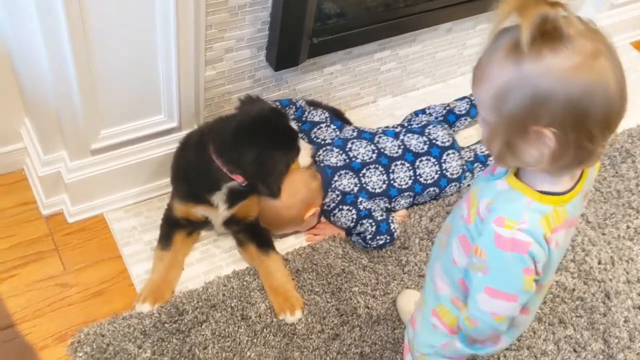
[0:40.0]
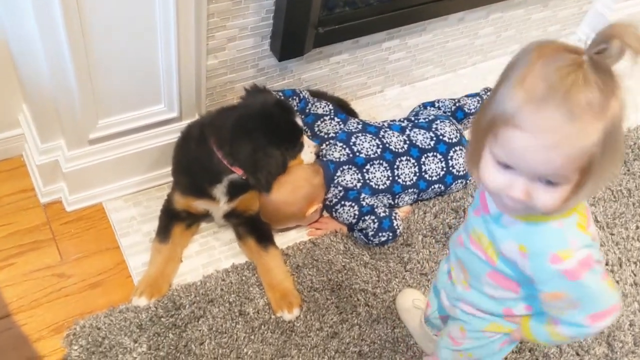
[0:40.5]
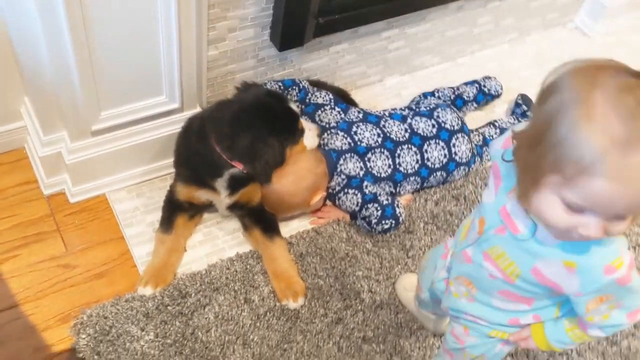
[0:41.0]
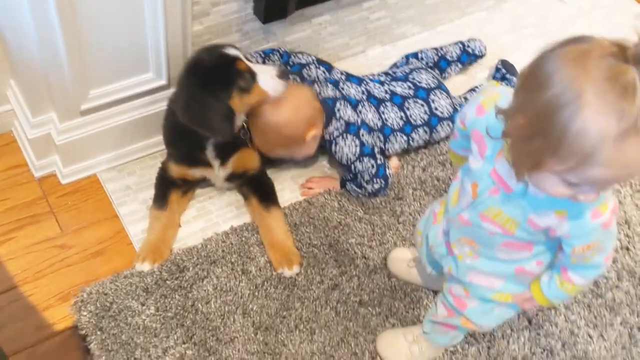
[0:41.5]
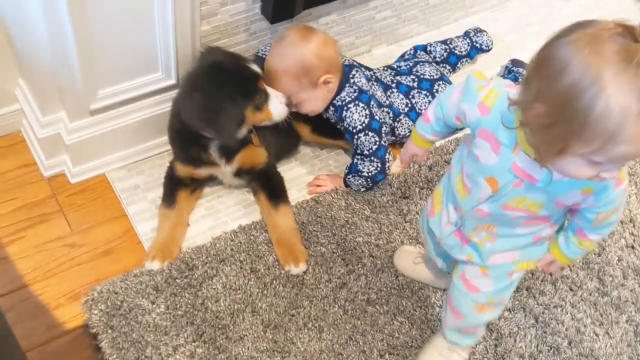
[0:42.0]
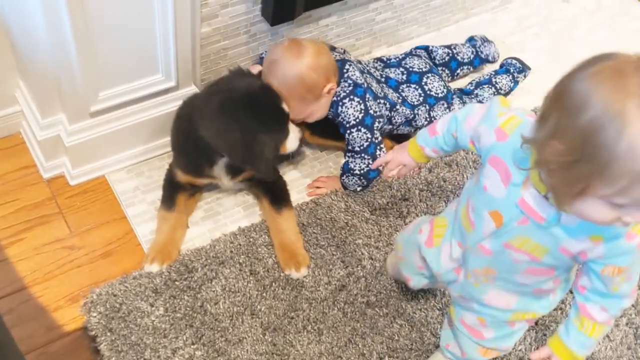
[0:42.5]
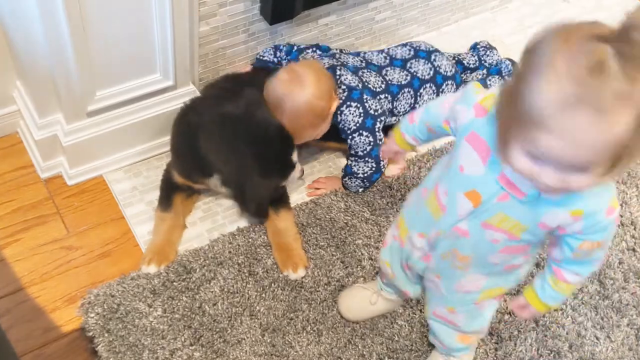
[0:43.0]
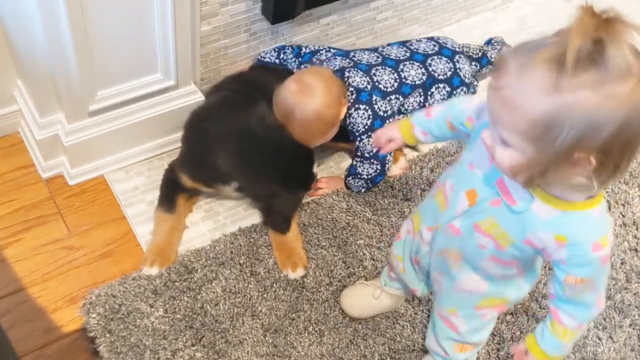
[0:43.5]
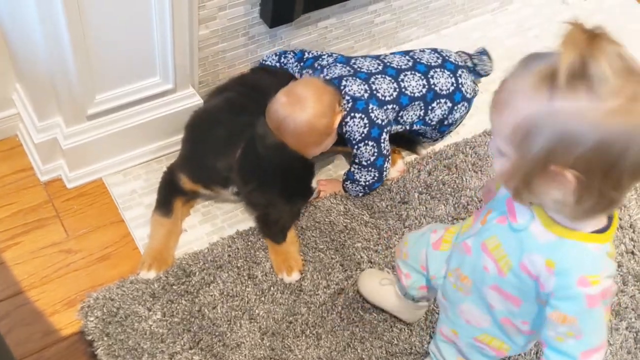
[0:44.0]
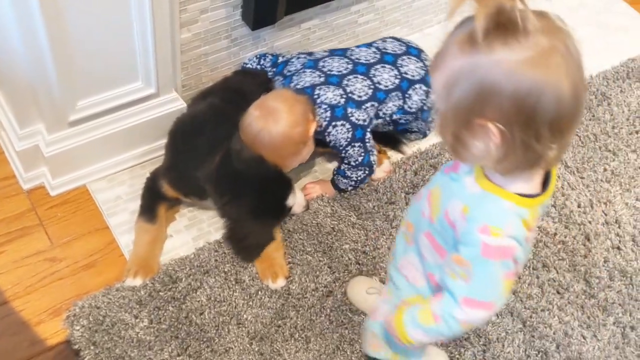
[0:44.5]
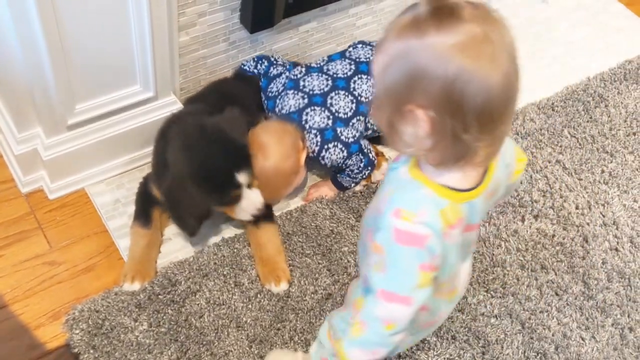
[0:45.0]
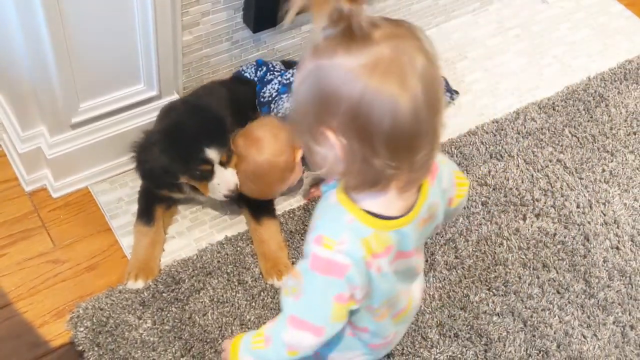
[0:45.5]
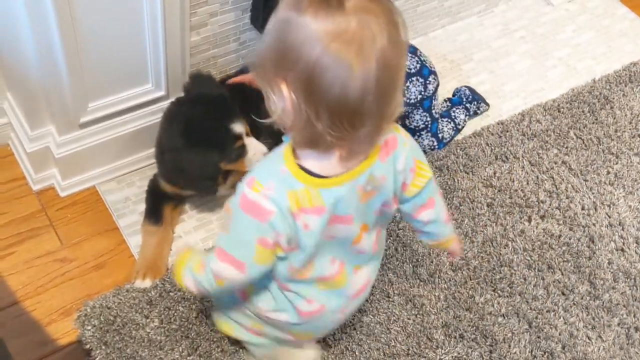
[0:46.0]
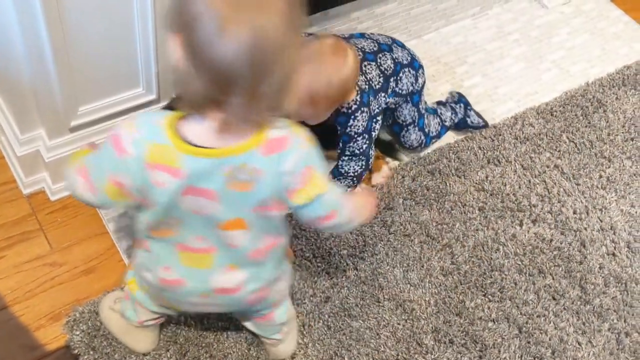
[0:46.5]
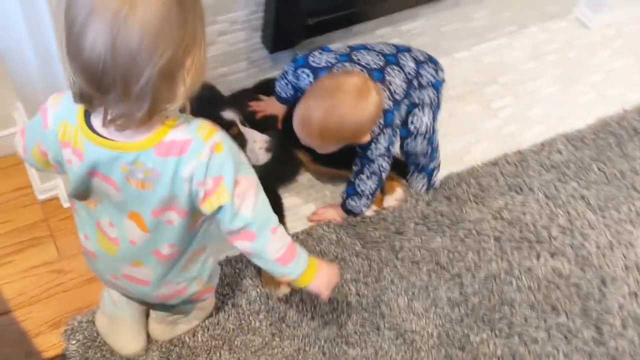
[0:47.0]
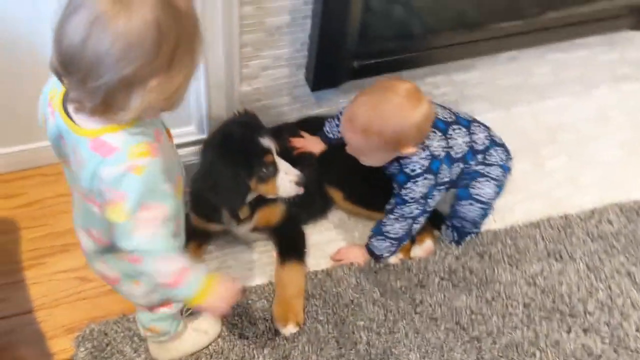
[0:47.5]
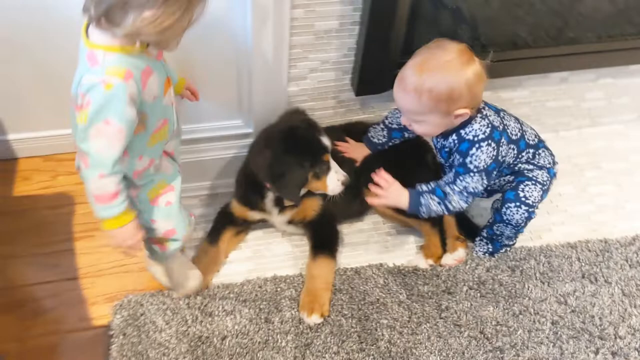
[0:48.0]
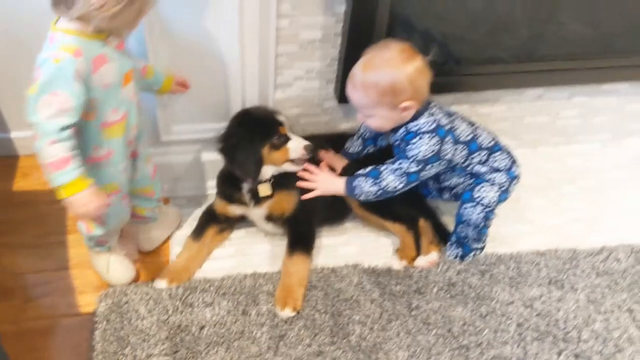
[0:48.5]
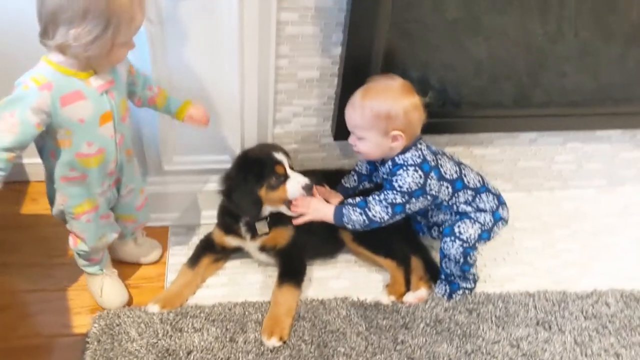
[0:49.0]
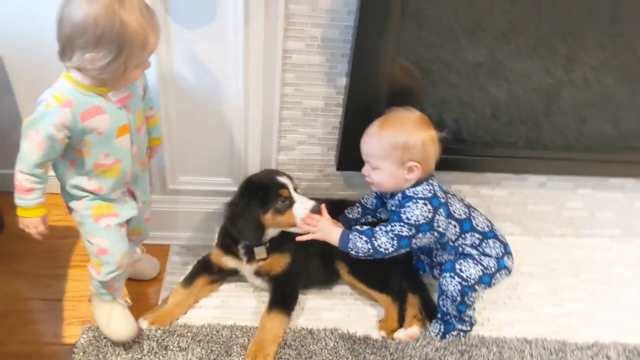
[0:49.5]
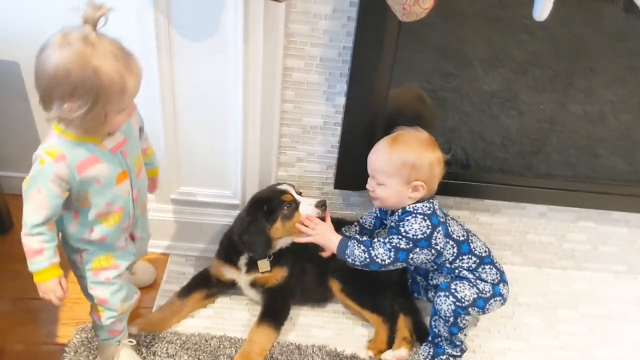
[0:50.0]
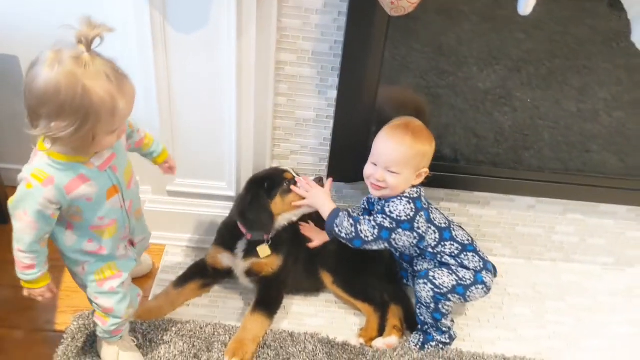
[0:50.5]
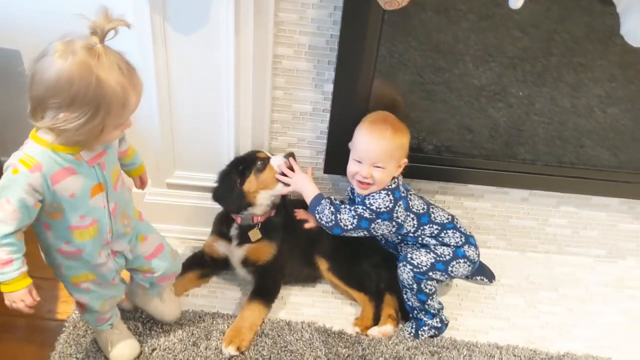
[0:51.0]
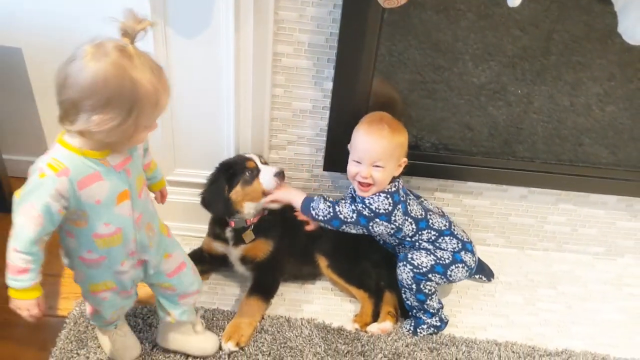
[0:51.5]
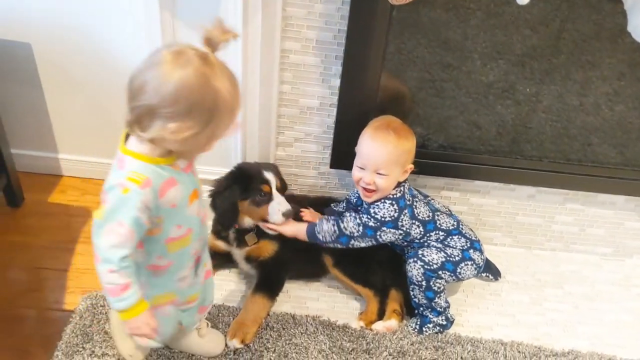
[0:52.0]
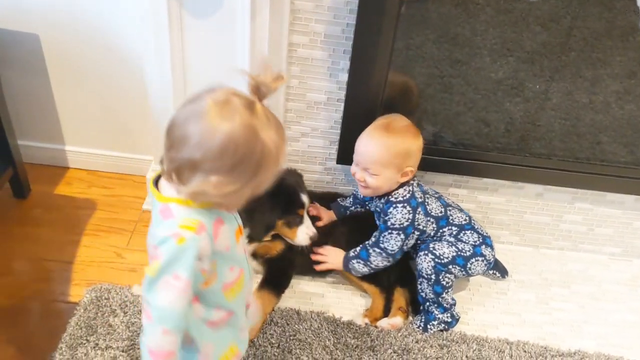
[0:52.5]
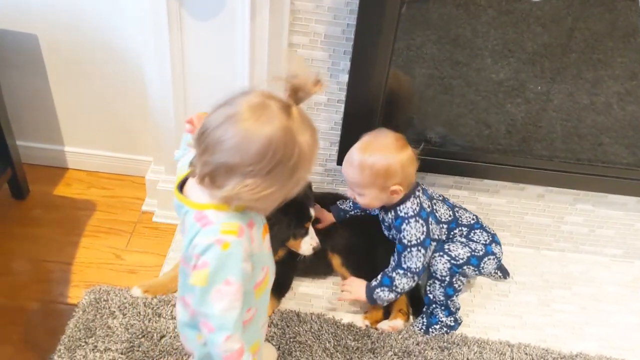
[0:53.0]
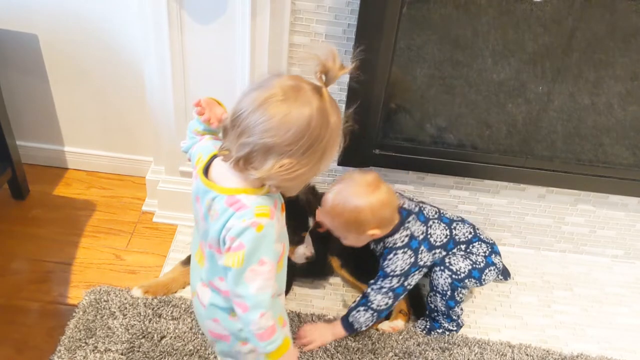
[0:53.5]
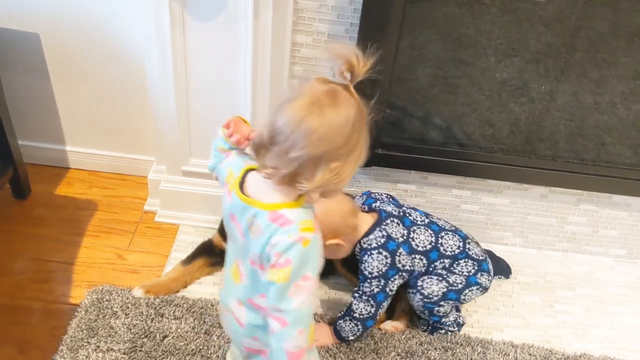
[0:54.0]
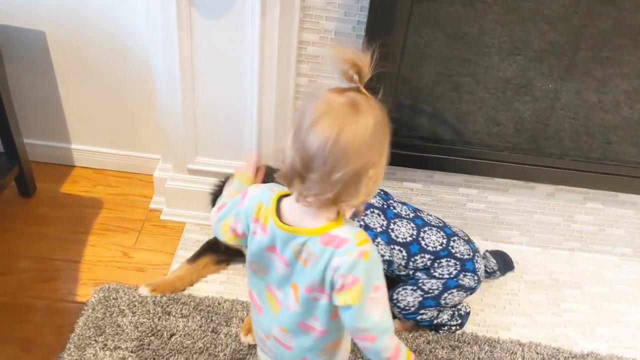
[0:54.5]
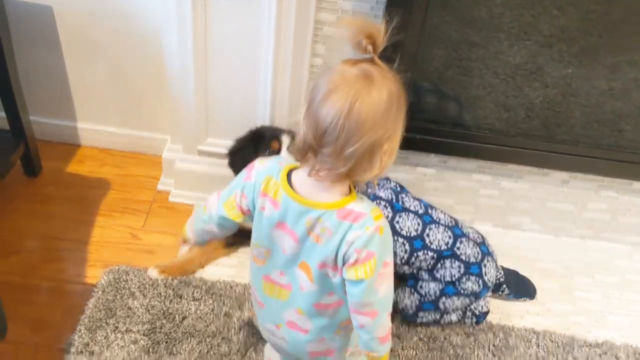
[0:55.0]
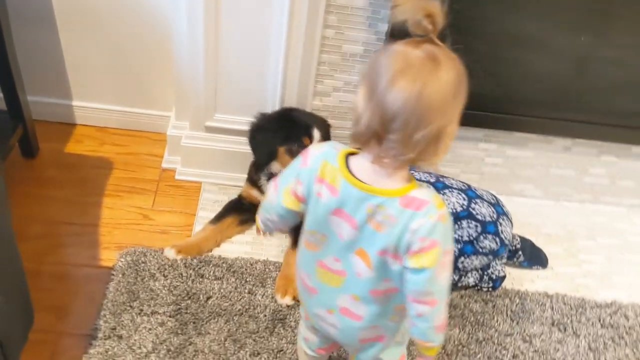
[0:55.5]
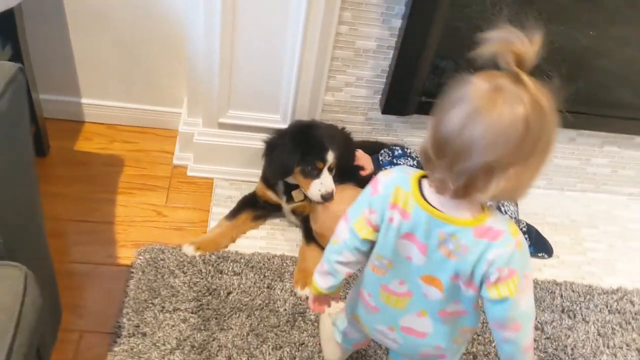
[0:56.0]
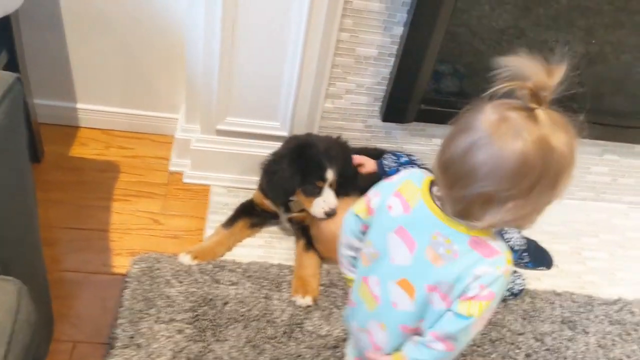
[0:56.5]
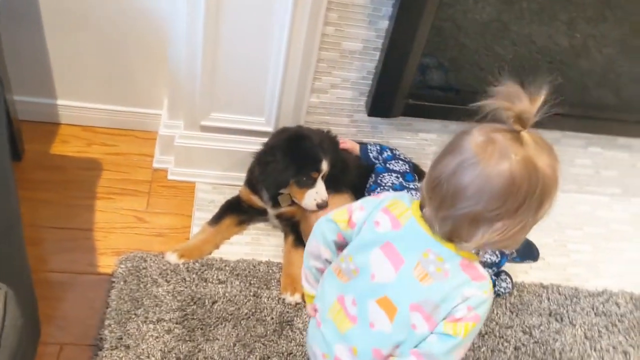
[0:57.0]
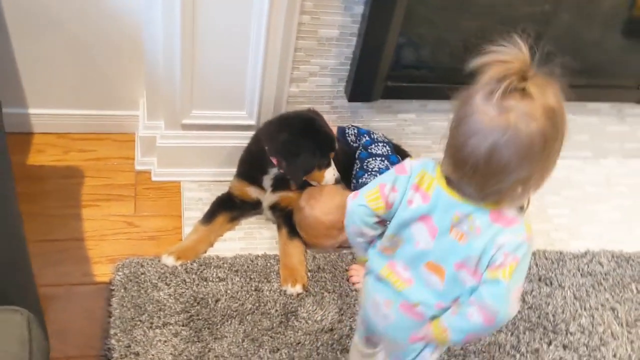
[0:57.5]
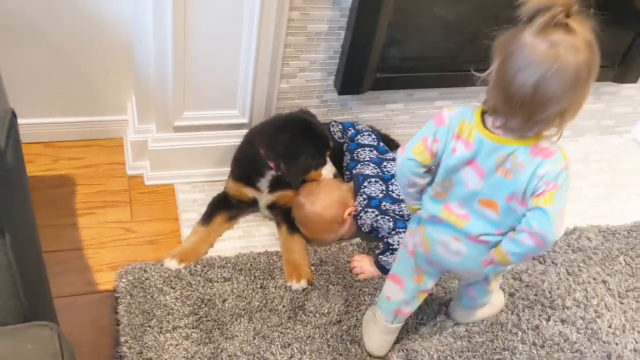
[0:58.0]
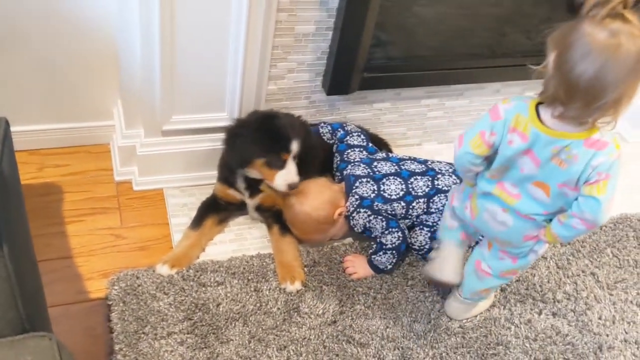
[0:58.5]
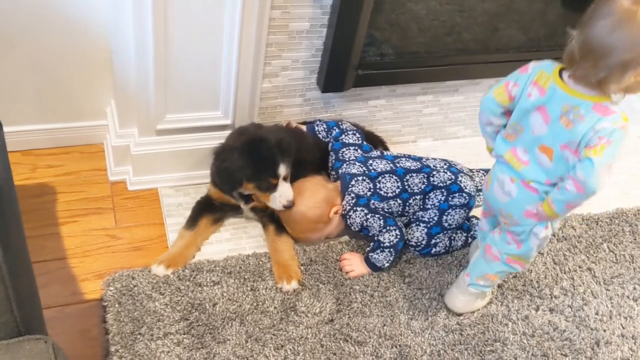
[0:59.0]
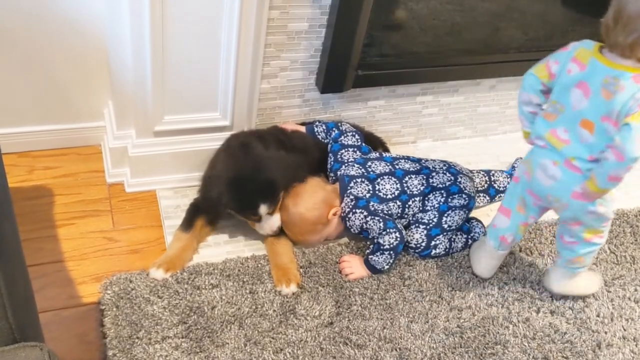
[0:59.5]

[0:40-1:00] Two small children and a puppy are in a house, with a fireplace in the background. On a rug in front of the fireplace, a black and tan puppy plays with the two children. The little boy is lying on the floor nuzzled against the puppy, while the little girl stands above, looking down at the puppy and the other child. The little girl looks away from the scene and turns back. The little boy keeps playing with the puppy, his head against its side. The puppy is sat on the floor, looking interested, and seems to want to lick the boy's hands. The little boy puts his hands in the puppy's mouth with a big grin on his face, and the puppy licks his hand. The boy's head then nuzzles against the puppy while the little girl watches.